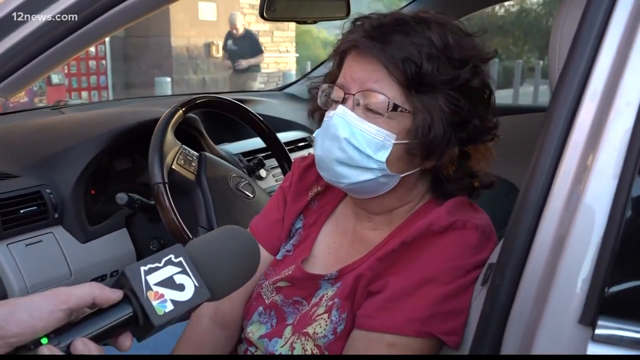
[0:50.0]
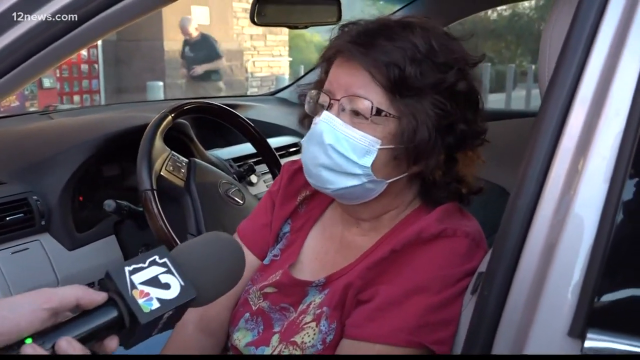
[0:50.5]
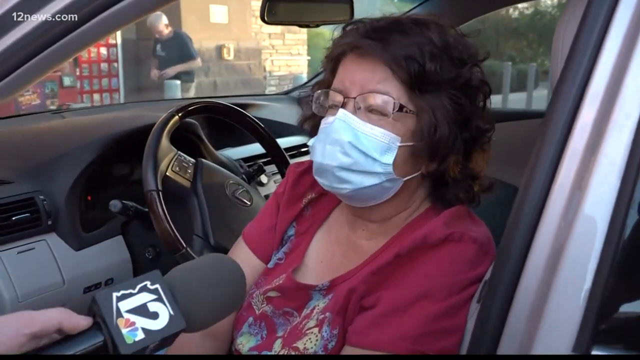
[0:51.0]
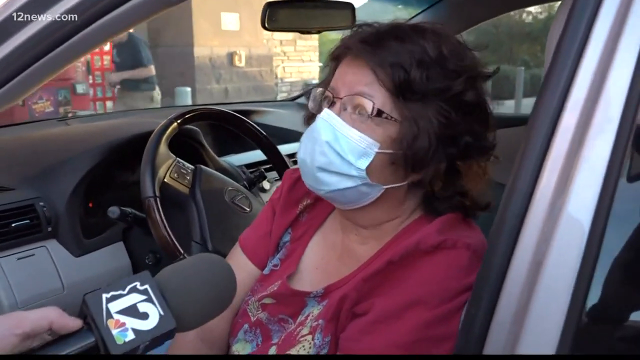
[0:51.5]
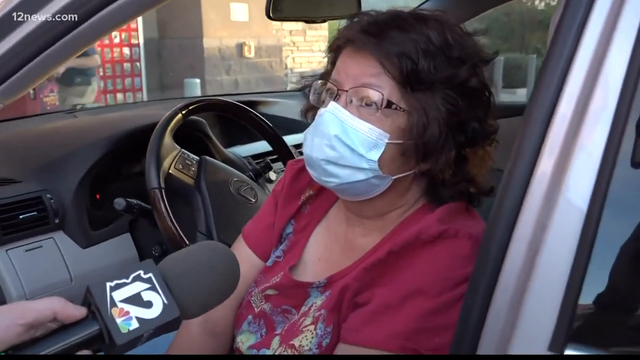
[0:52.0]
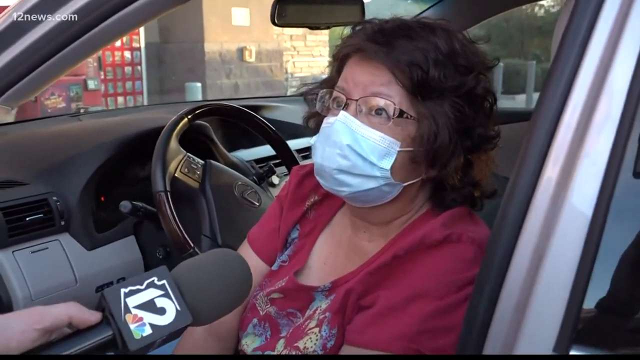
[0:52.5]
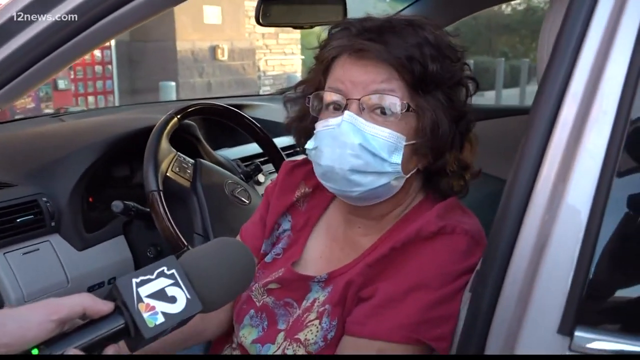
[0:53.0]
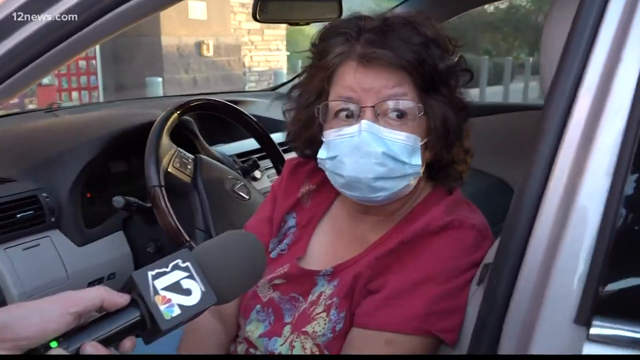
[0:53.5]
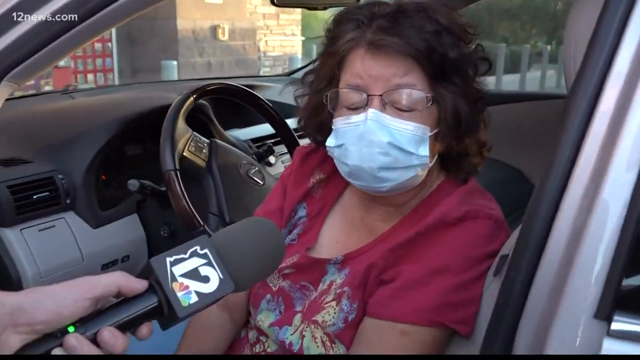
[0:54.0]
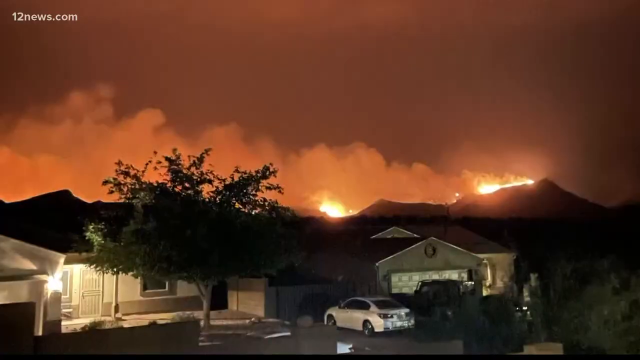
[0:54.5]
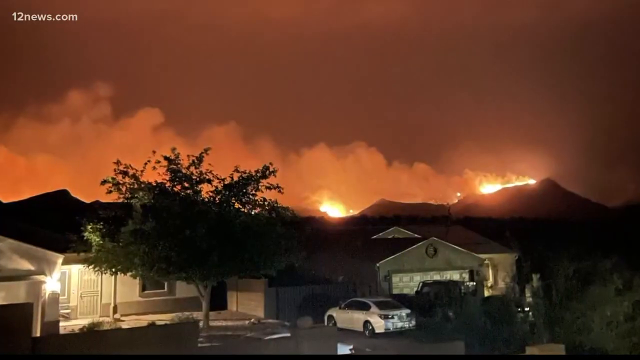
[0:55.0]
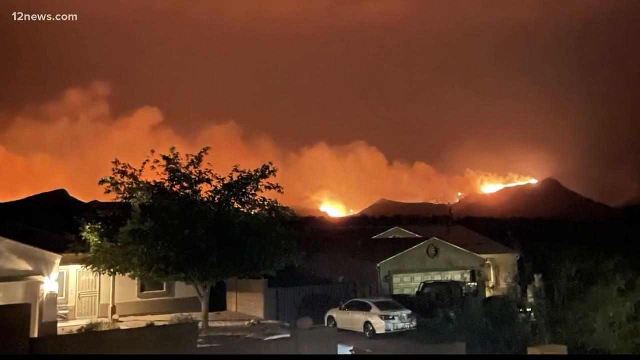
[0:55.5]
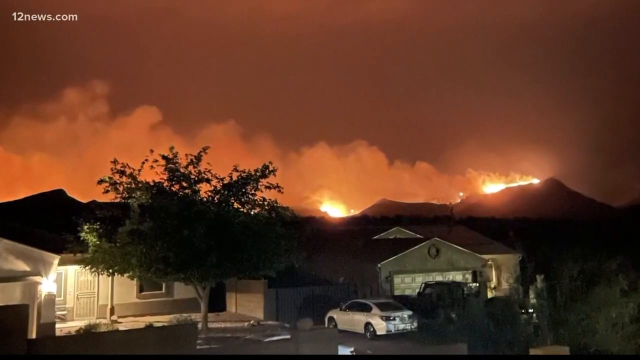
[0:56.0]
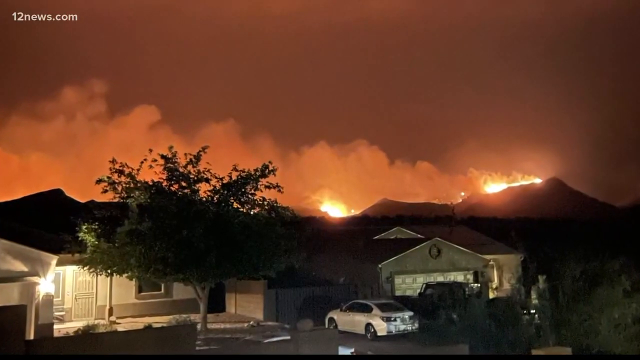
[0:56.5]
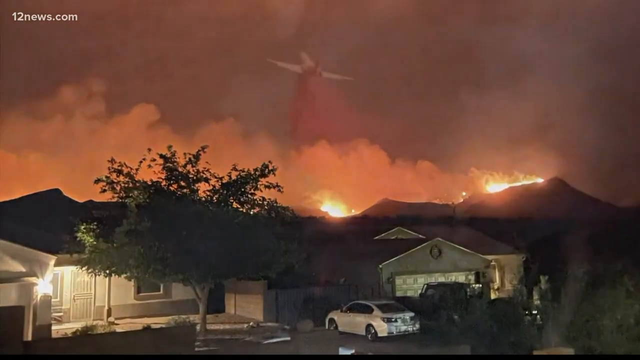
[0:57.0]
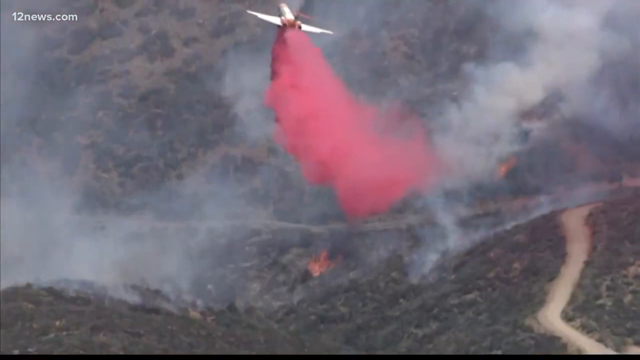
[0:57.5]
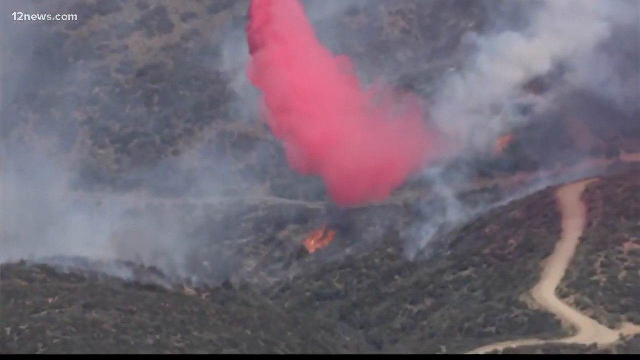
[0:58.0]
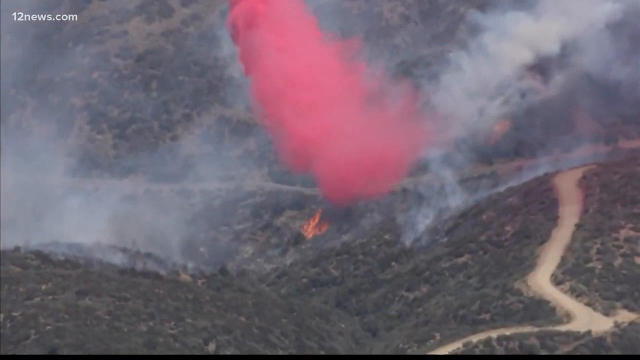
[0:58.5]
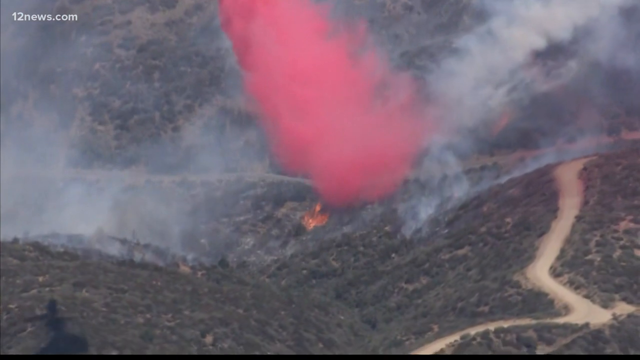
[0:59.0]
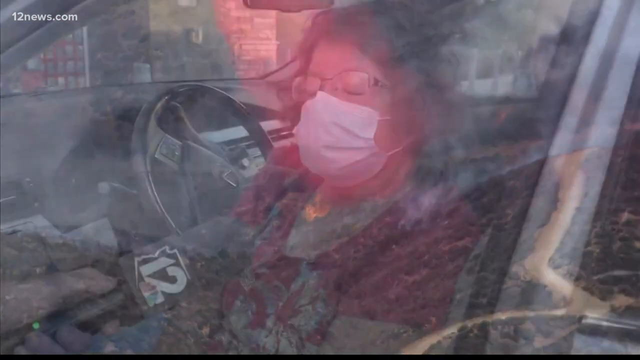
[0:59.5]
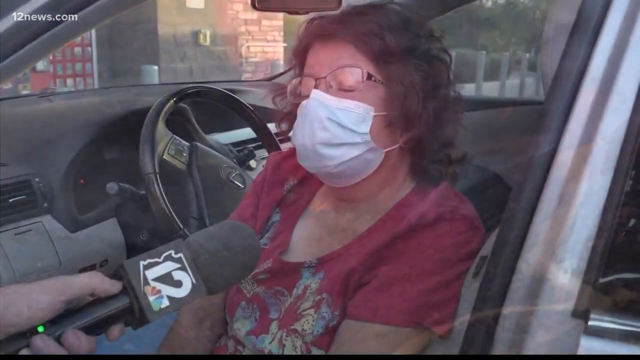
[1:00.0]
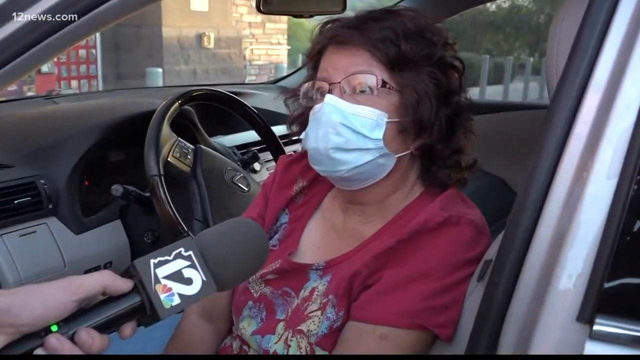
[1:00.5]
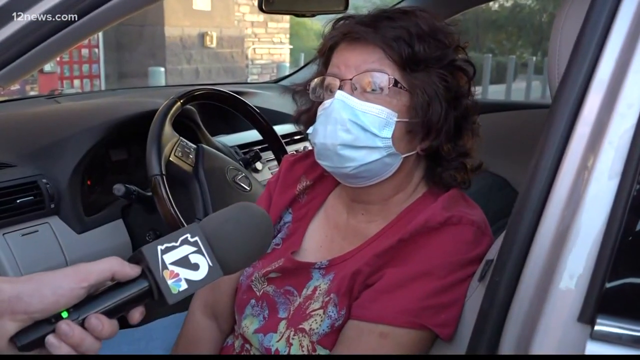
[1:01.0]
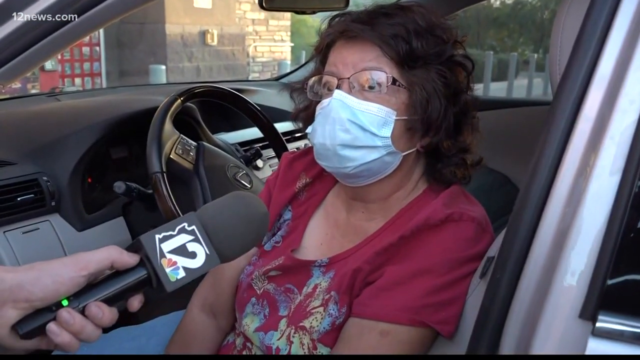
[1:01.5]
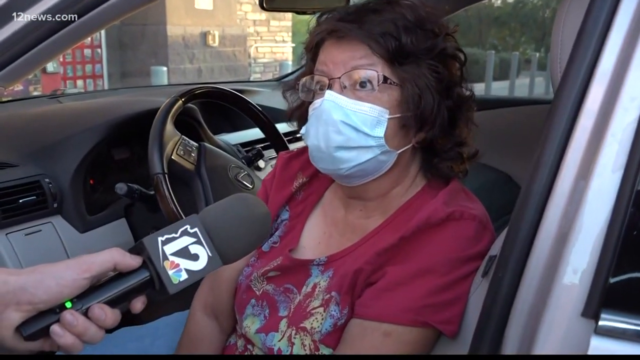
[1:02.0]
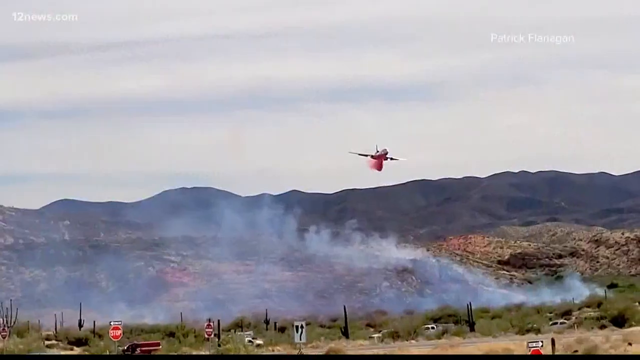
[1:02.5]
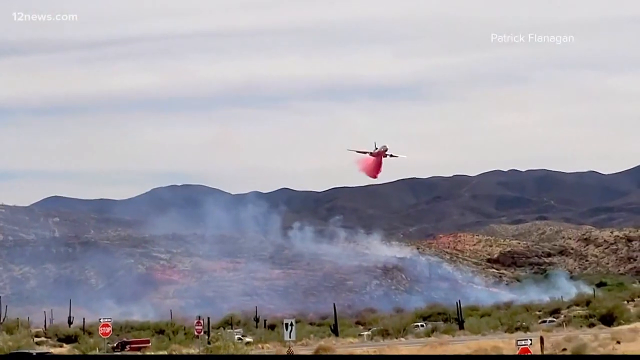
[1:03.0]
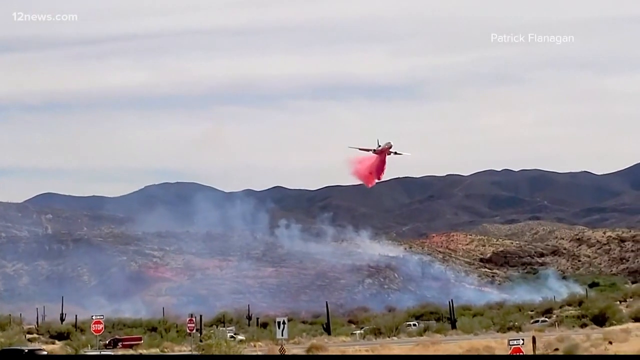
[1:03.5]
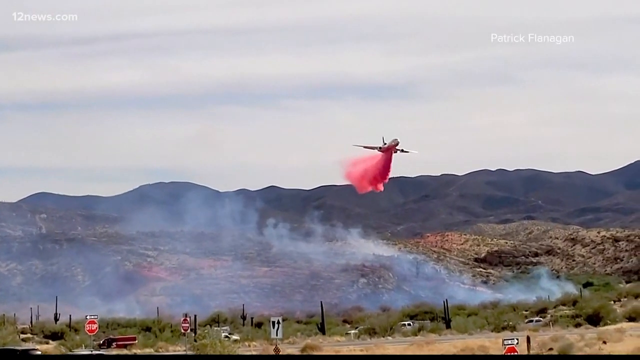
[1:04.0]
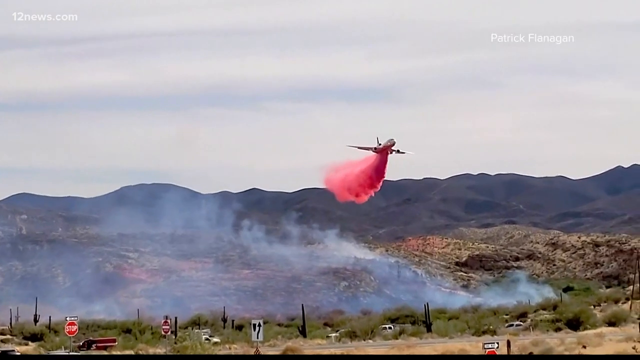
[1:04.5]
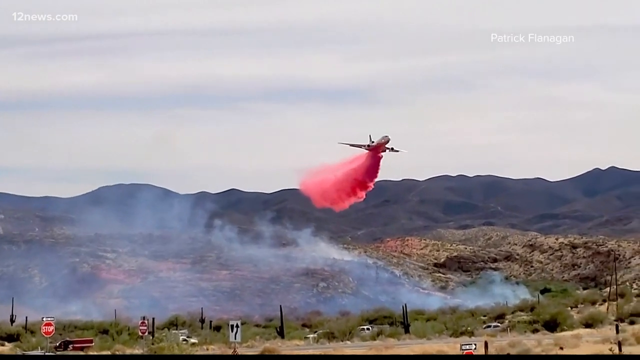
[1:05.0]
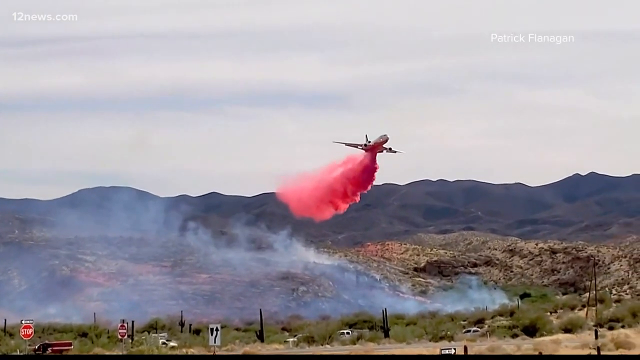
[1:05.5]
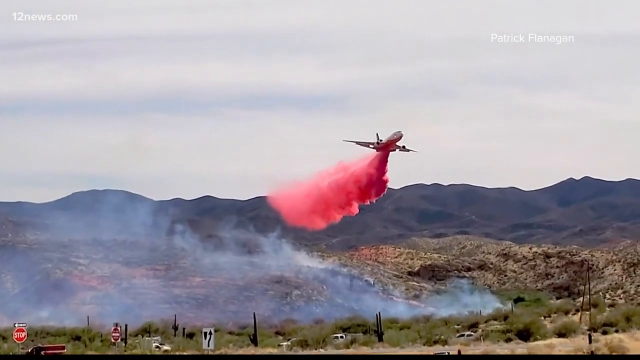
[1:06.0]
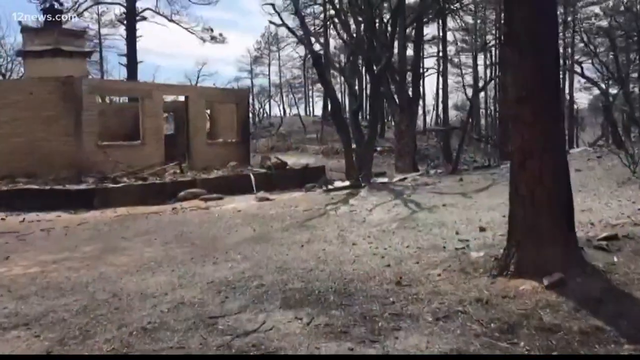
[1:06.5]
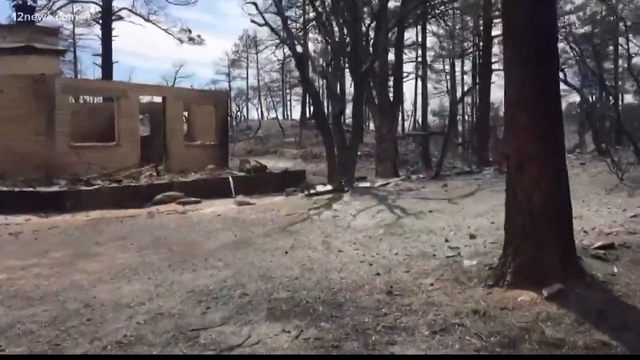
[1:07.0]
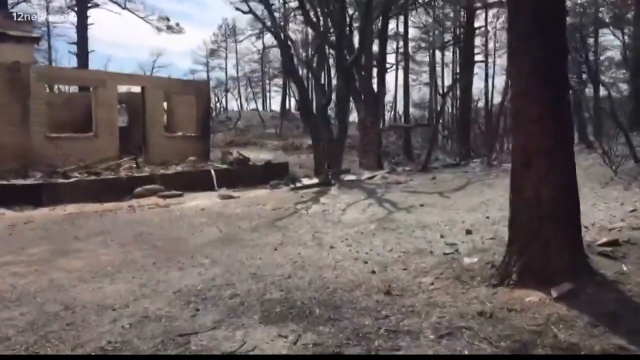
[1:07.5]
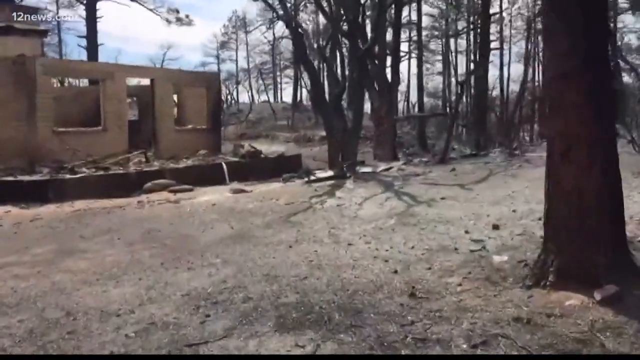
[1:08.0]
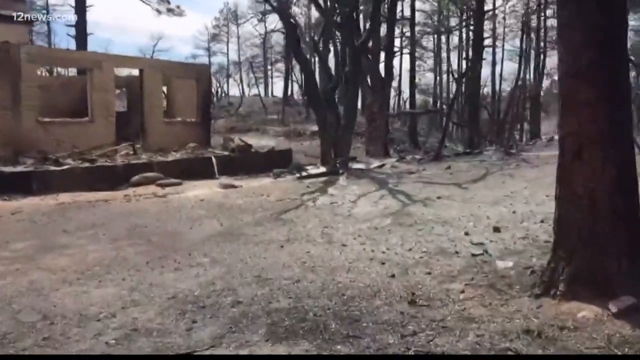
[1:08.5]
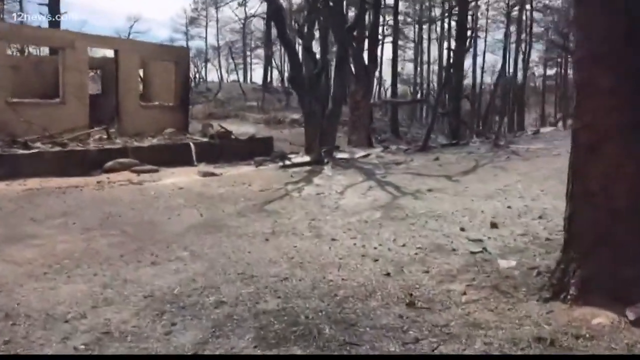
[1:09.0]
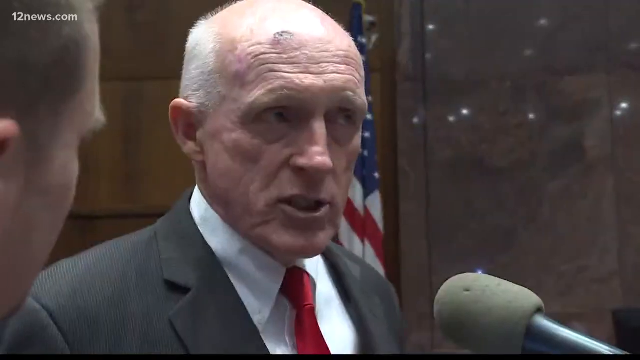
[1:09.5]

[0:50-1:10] A woman is interviewed by a news correspondent. She wears a COVID-19-era mask, a red dress jacket with a red shirt underneath, and black-framed glasses. She gives her eyewitness account and shows signs of discomfort and panic. The video cuts to more scenes of hills burning, with houses in the foreground and raging wildfires blazing behind them. It then cuts to planes, both large commercial planes and private planes, dropping what seems to be some form of fire suppressant on the fires. More footage of burned-out homes appears before a cut to an old man wearing a black suit, white dress shirt and black tie.